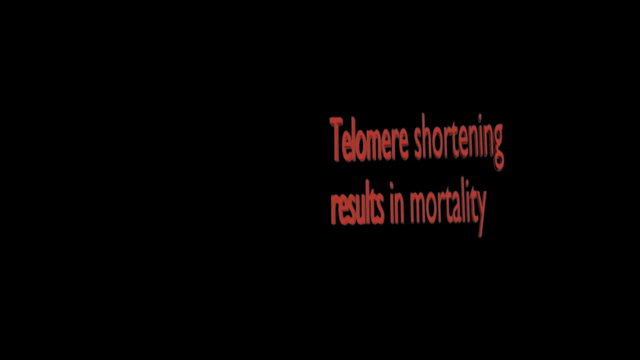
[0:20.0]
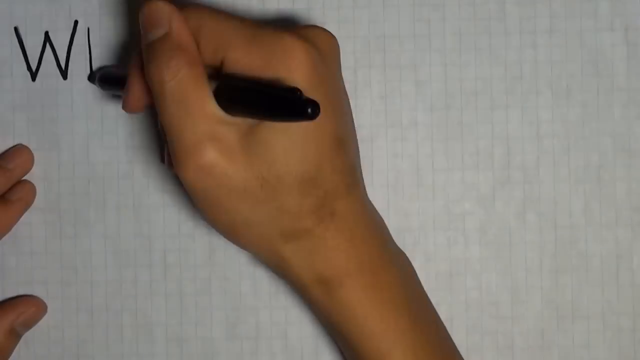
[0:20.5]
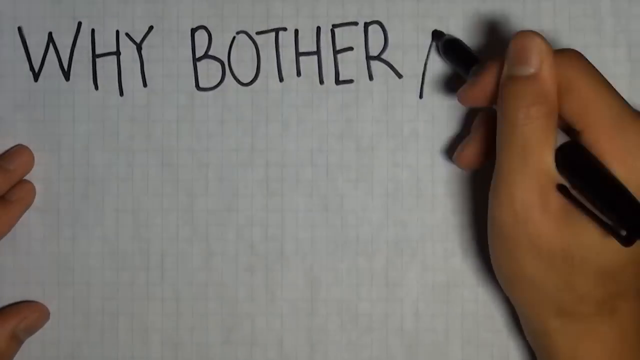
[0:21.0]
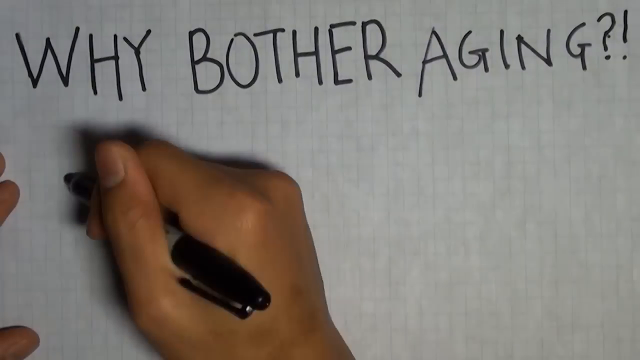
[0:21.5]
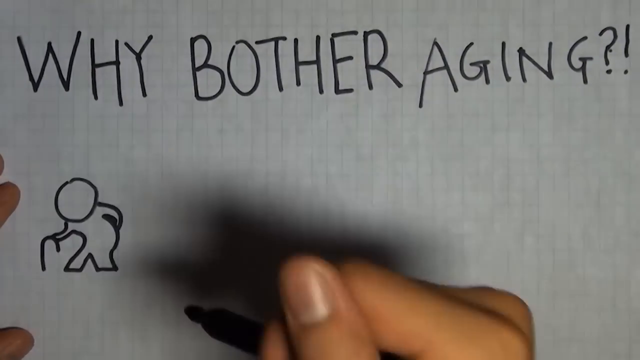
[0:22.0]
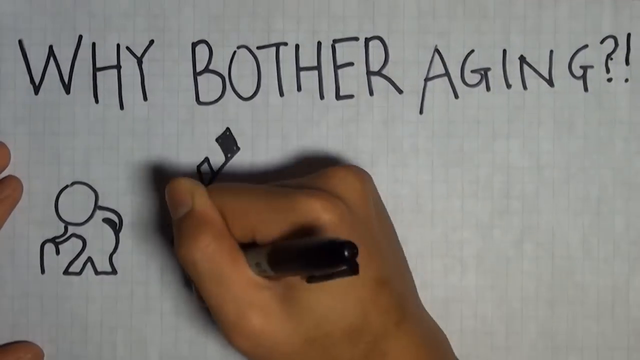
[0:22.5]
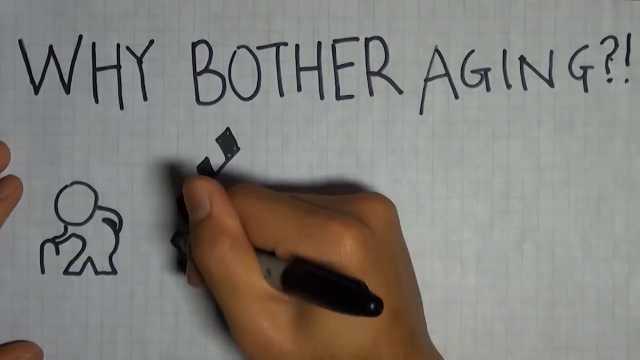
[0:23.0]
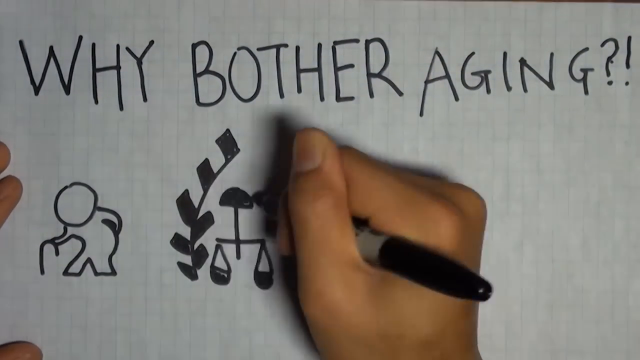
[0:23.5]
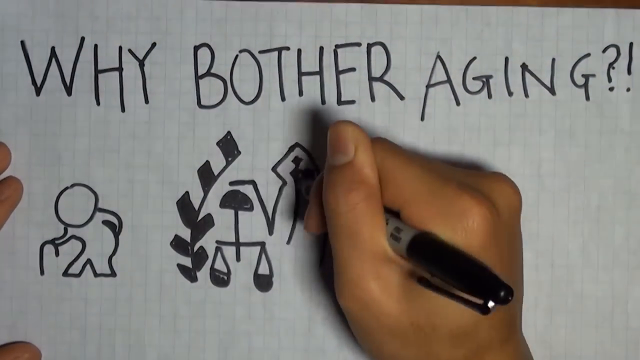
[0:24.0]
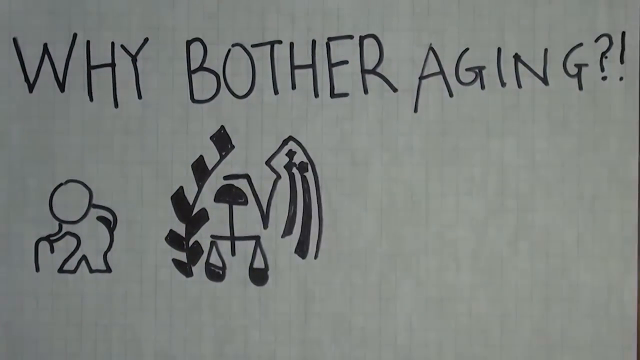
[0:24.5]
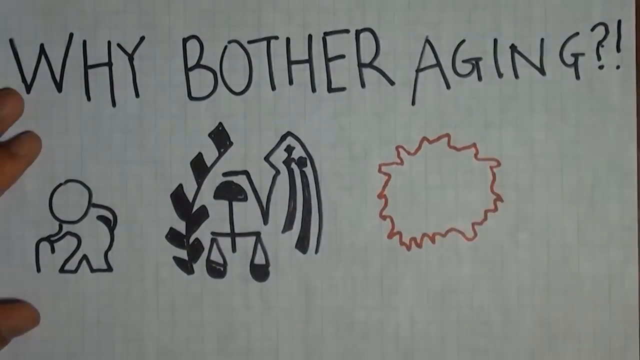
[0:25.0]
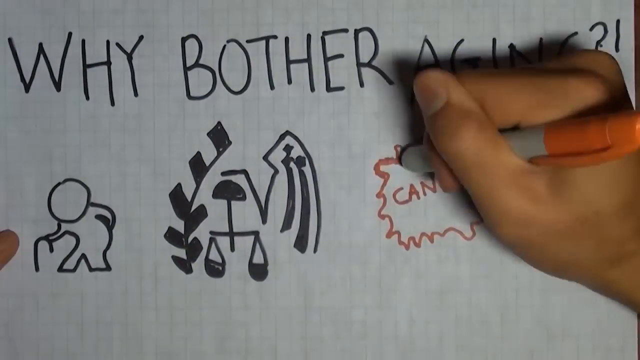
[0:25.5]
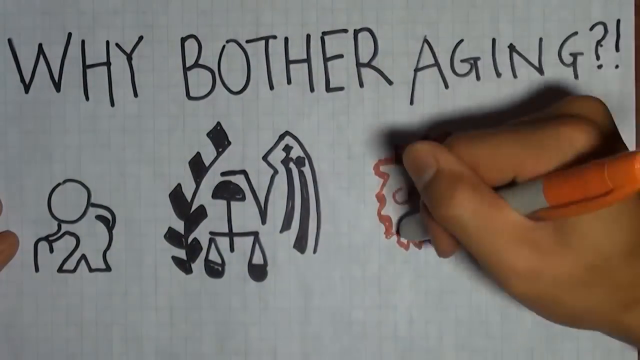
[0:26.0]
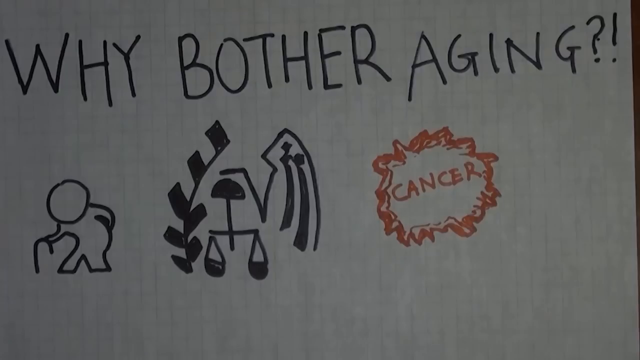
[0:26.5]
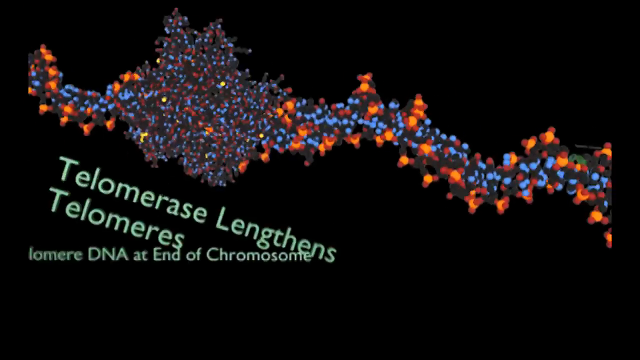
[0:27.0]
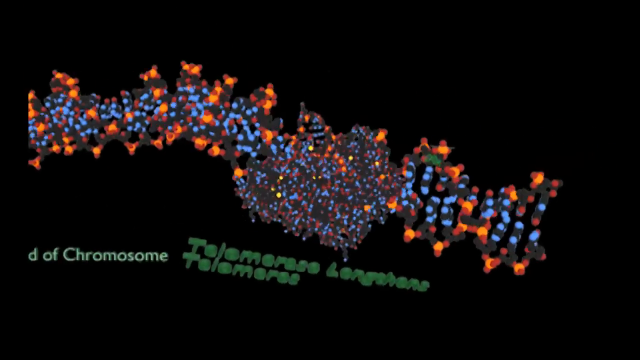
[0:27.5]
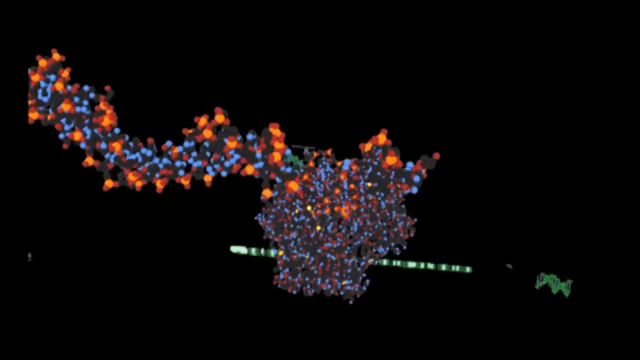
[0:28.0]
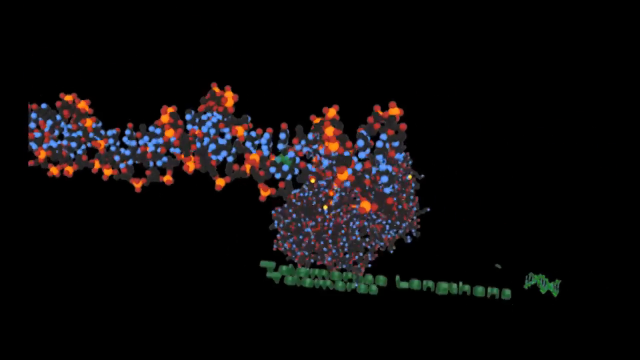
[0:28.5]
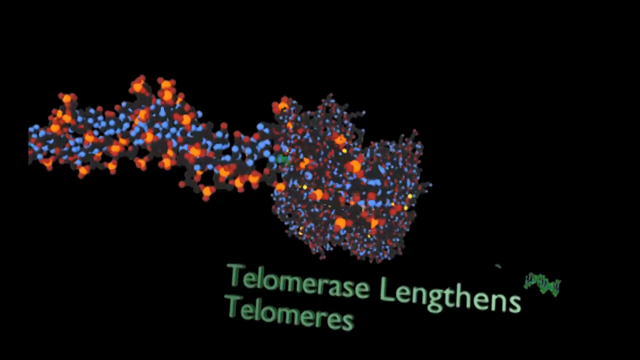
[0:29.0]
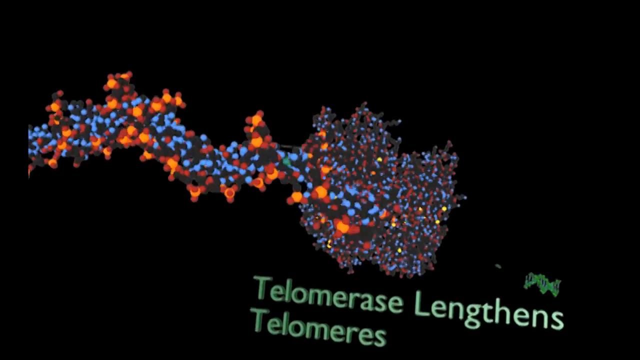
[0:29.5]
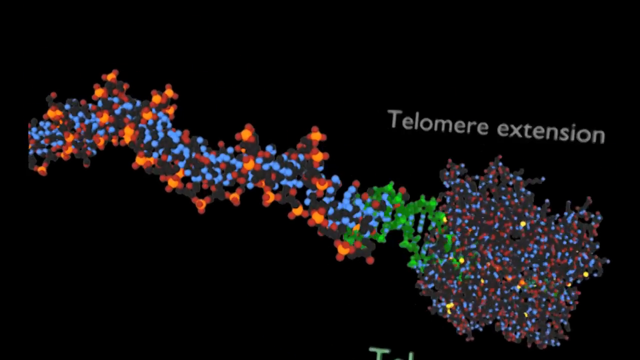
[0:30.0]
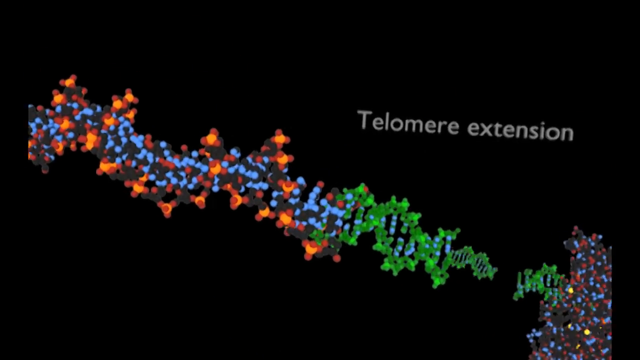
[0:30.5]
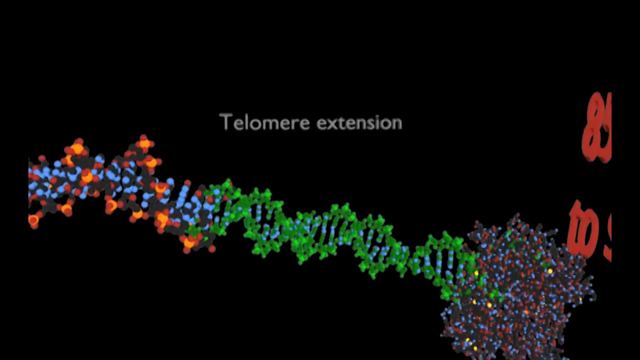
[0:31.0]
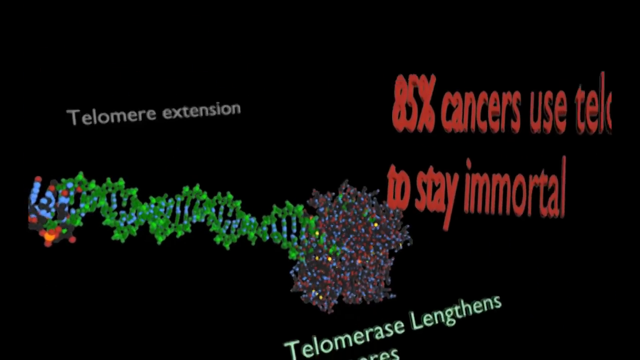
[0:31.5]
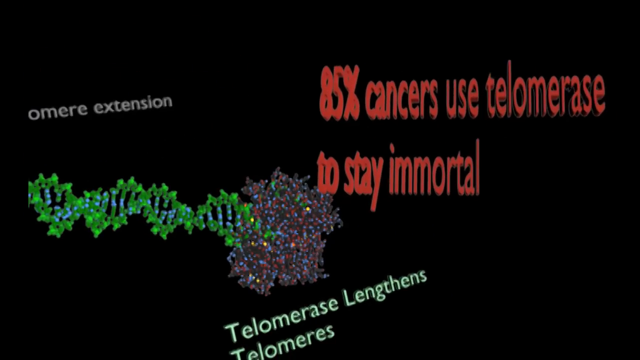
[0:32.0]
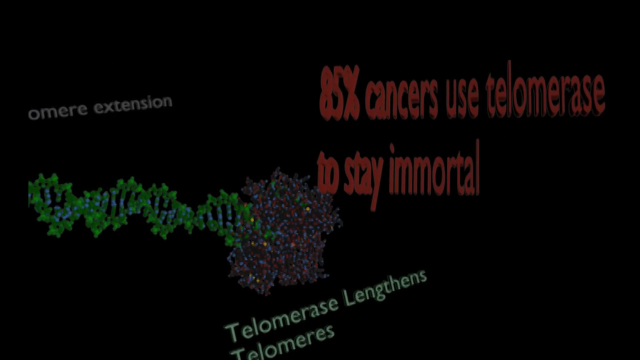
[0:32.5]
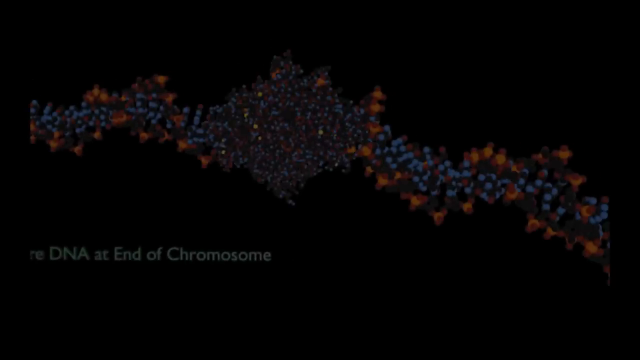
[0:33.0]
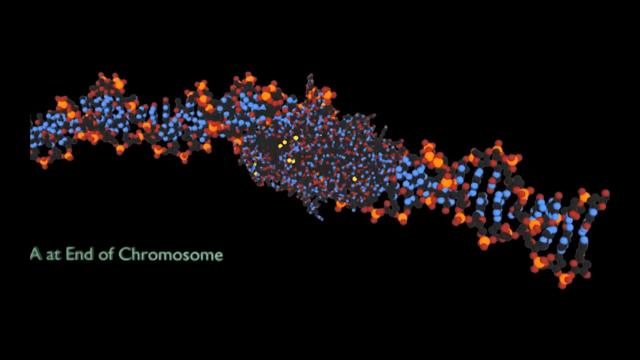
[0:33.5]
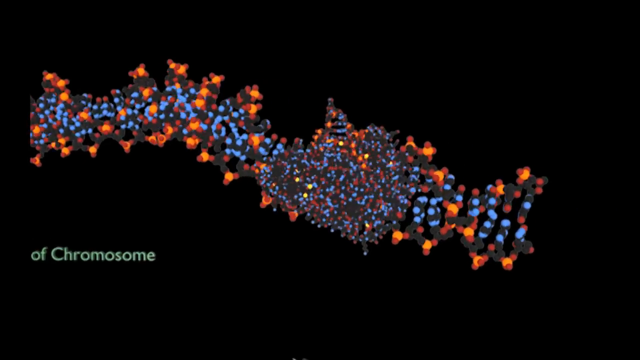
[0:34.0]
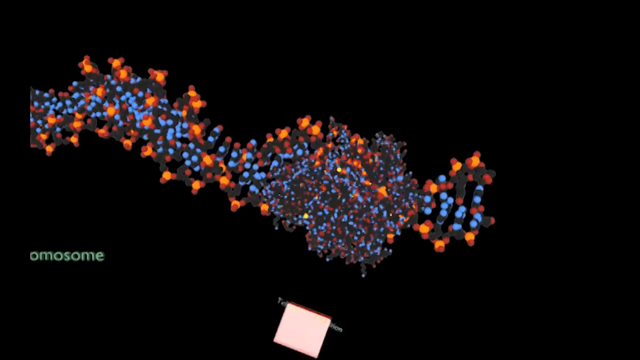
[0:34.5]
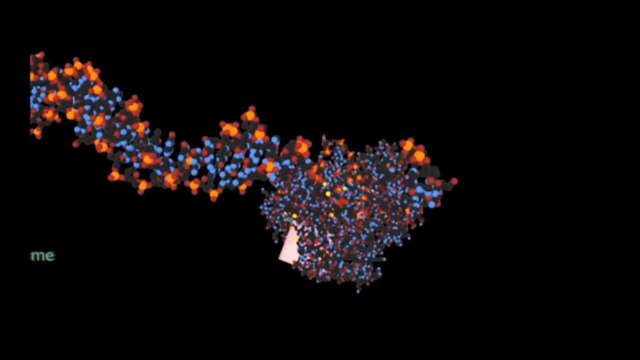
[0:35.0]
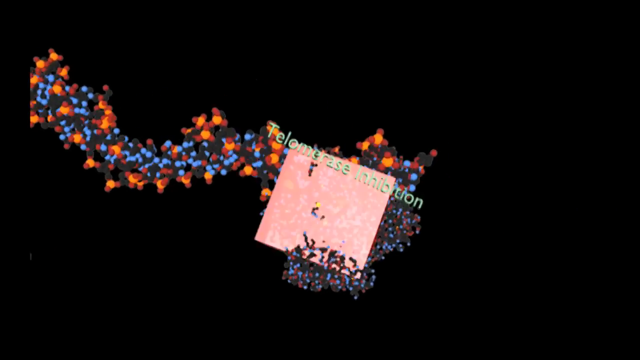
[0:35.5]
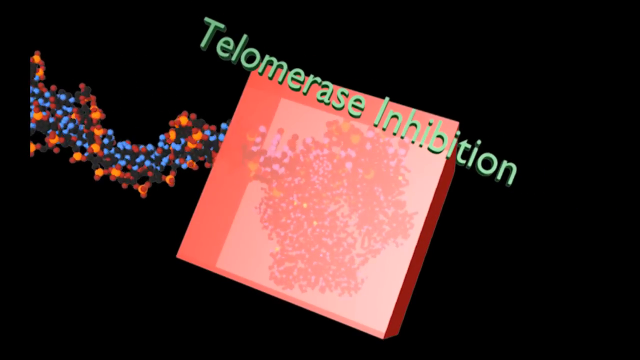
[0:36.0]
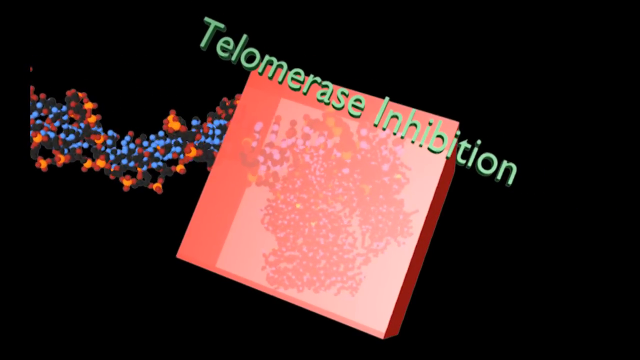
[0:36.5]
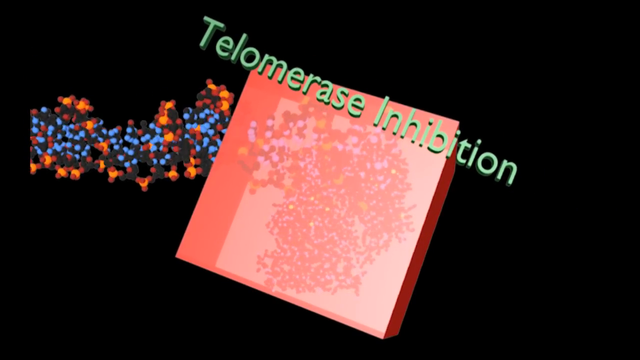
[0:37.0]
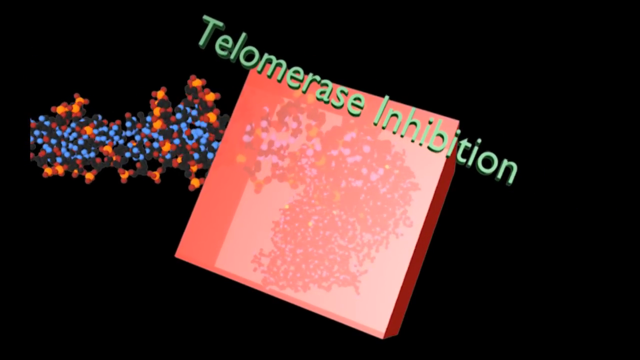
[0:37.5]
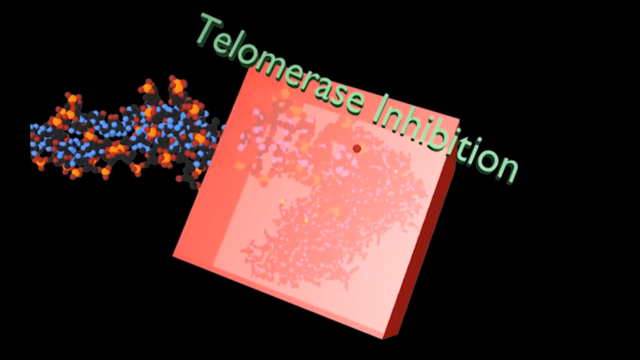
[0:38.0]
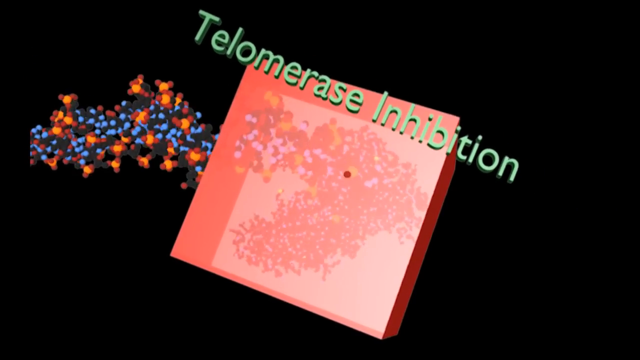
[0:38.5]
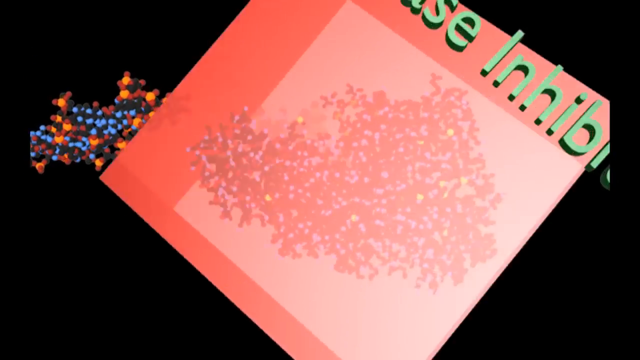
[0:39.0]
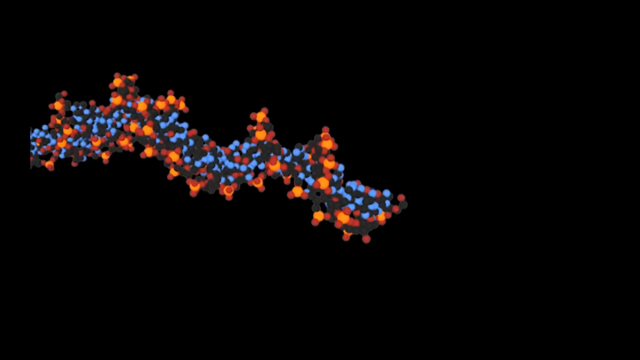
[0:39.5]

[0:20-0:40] Red lettering on a dark screen reads "telomere shortening results in mortality." A person with a pen then draws on a piece of paper, and "Why bother aging?" appears. The person draws an older person slumped over a cane. Next a cancer cell appears, followed by "the telomere lengthens" and a picture that may show telomere extension of a DNA helix. Then the text reads "85% cancers use telomerase to stay immortal," followed by "telomerase inhibition."